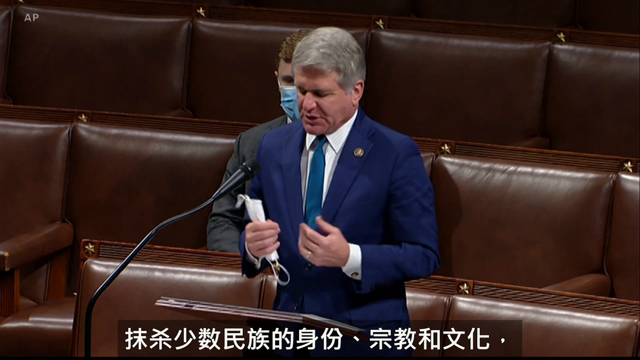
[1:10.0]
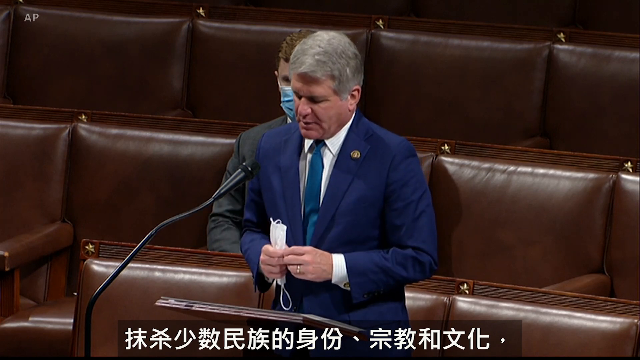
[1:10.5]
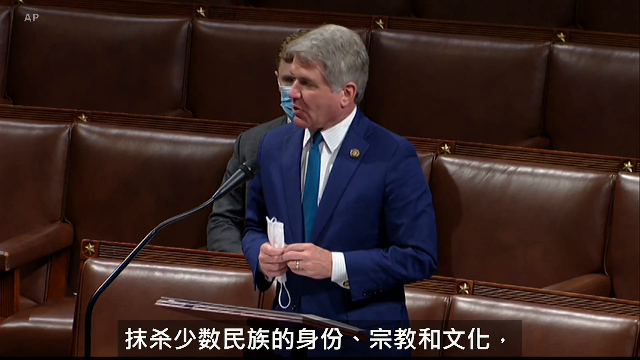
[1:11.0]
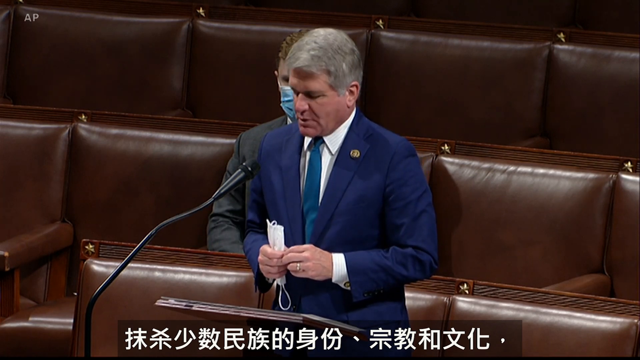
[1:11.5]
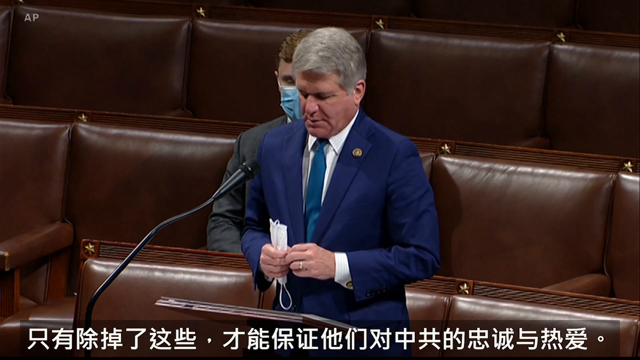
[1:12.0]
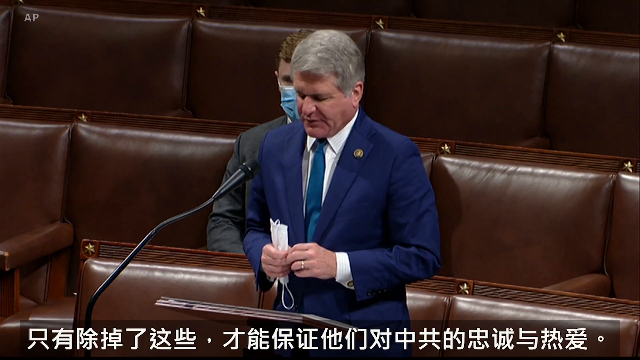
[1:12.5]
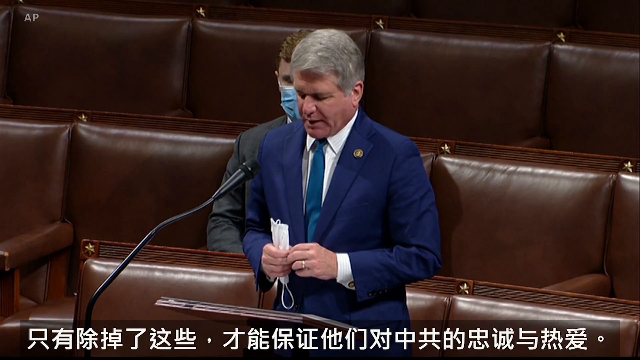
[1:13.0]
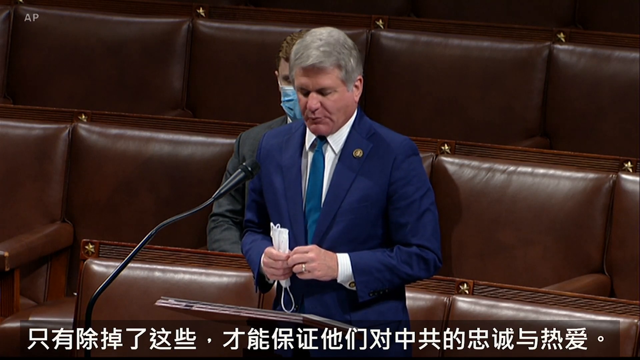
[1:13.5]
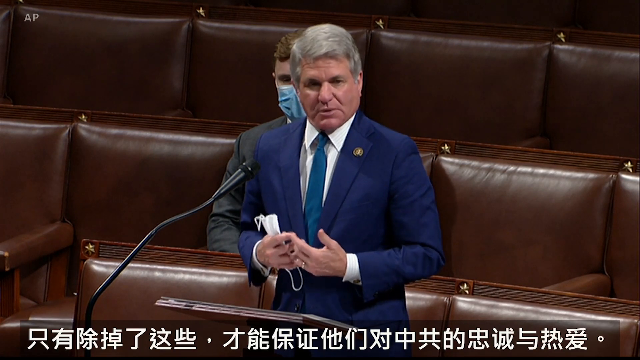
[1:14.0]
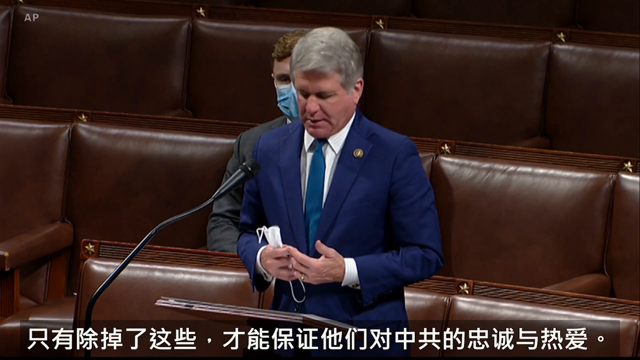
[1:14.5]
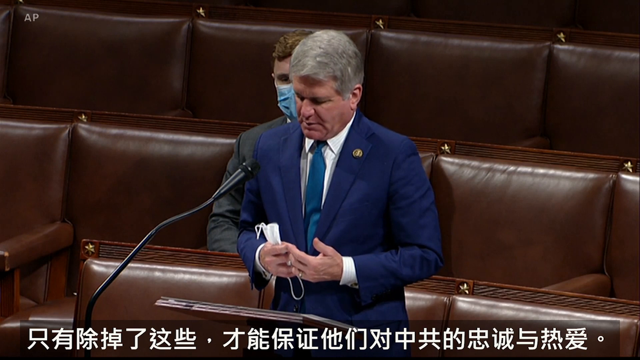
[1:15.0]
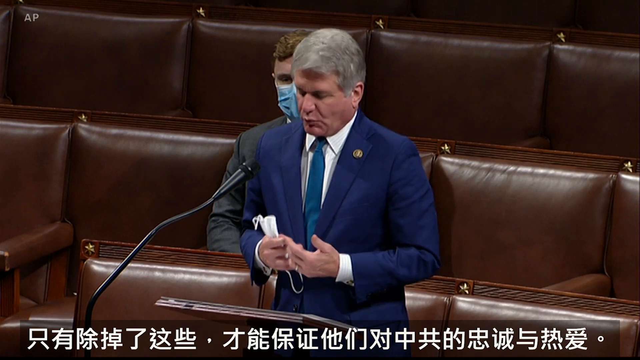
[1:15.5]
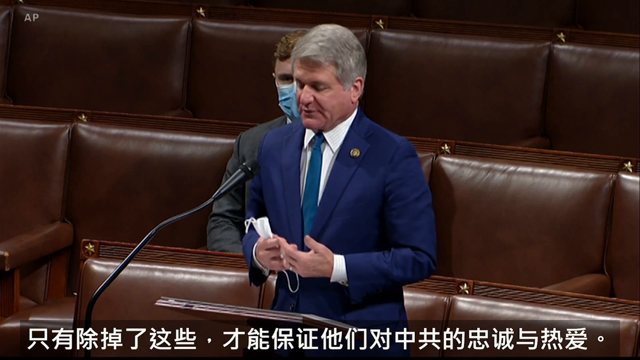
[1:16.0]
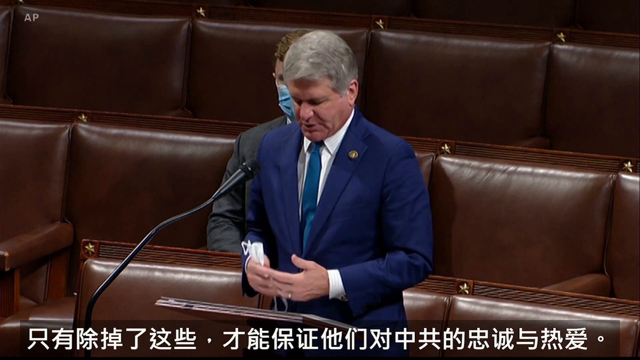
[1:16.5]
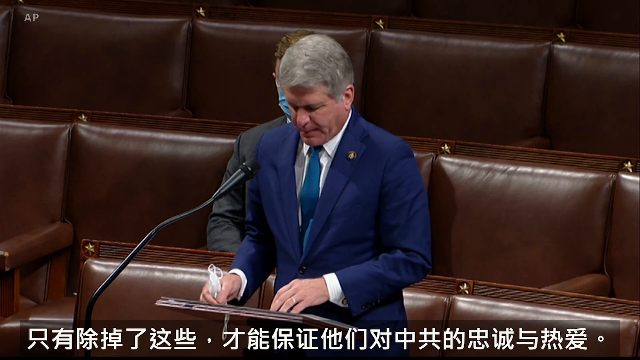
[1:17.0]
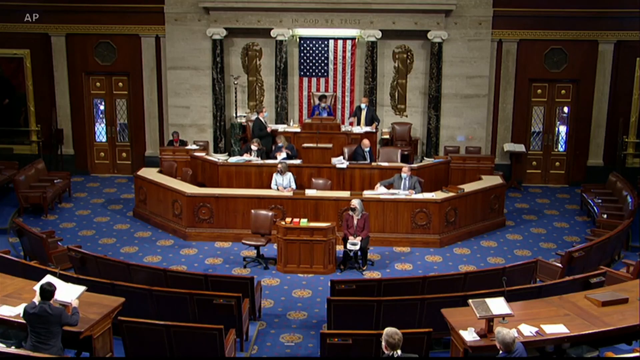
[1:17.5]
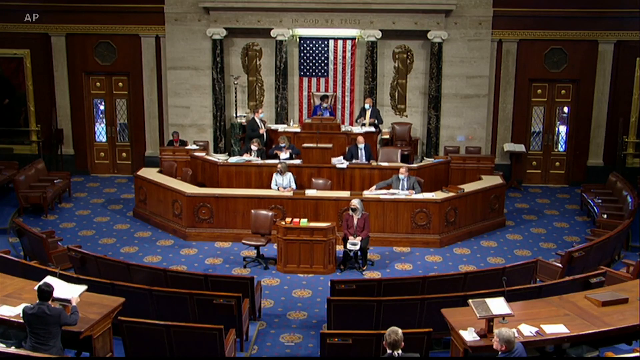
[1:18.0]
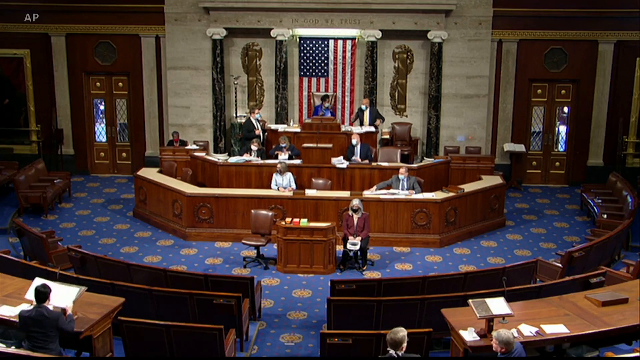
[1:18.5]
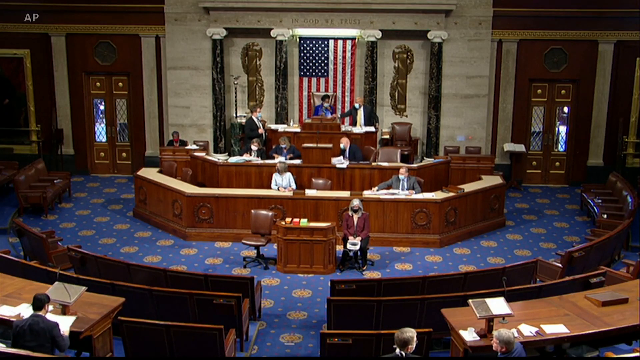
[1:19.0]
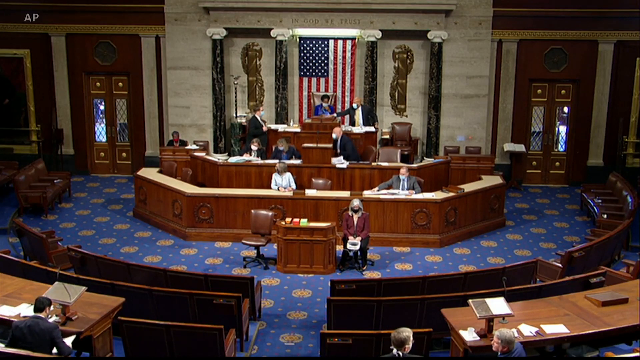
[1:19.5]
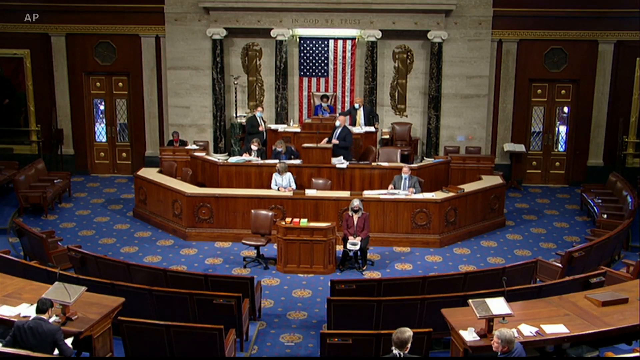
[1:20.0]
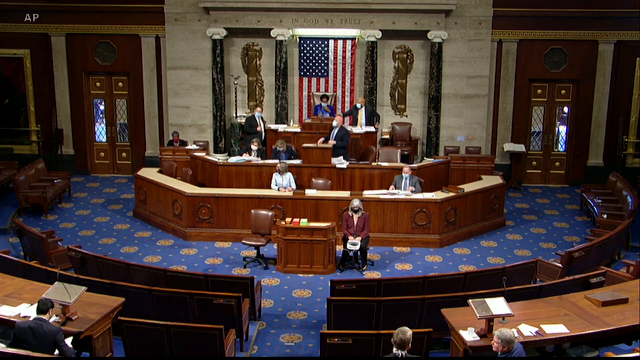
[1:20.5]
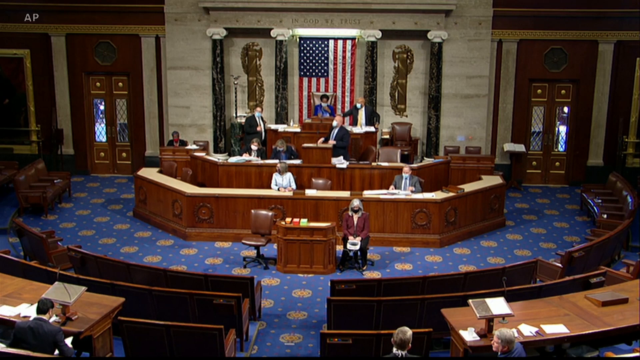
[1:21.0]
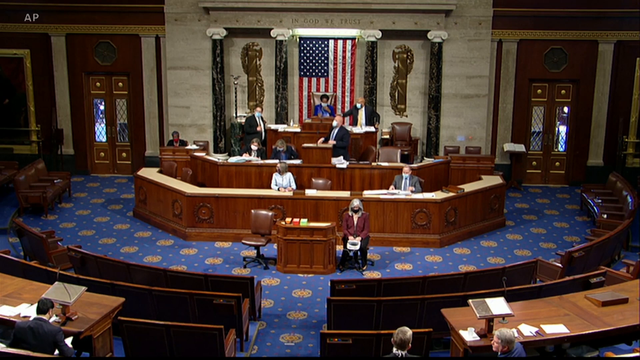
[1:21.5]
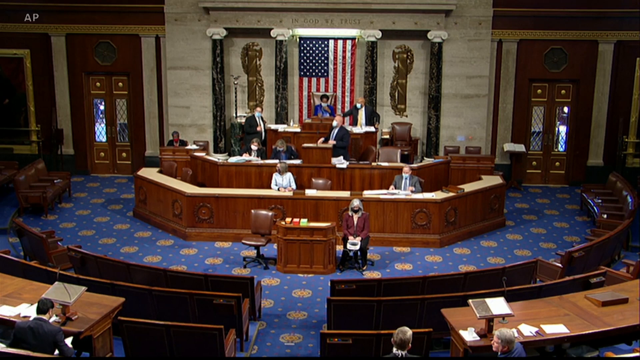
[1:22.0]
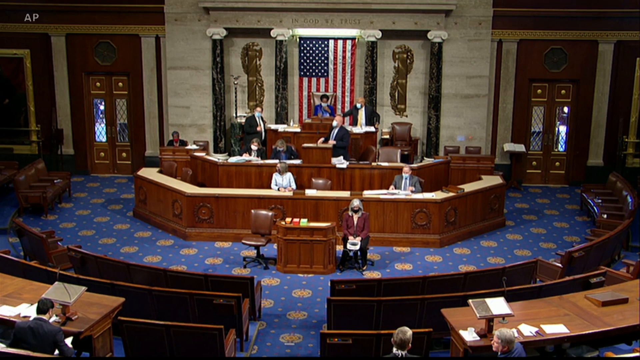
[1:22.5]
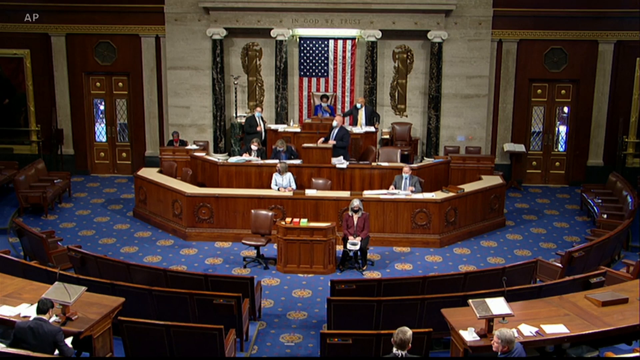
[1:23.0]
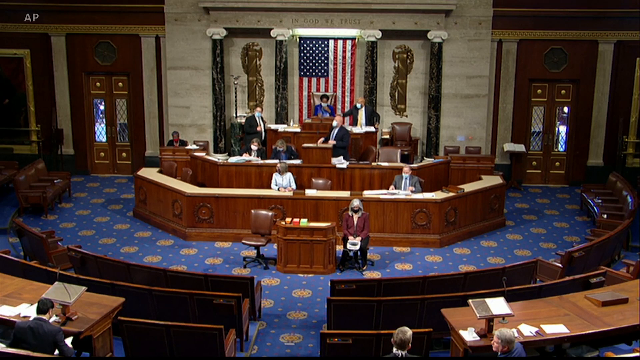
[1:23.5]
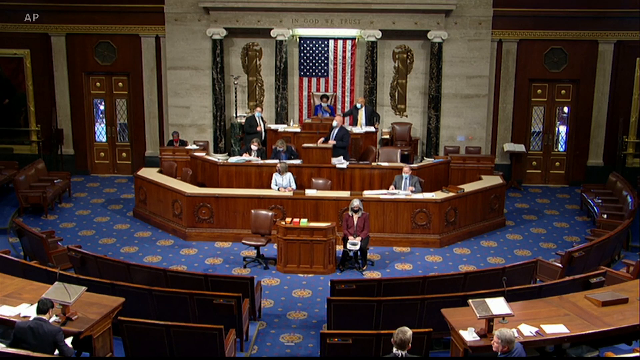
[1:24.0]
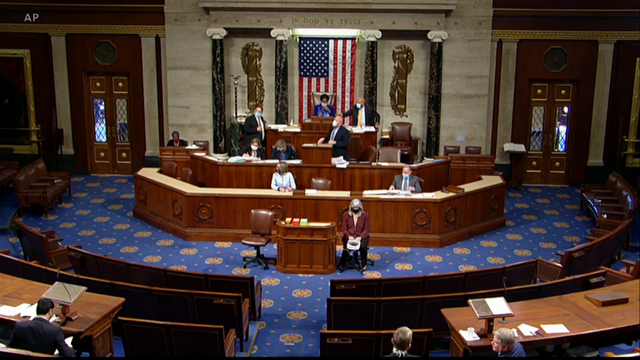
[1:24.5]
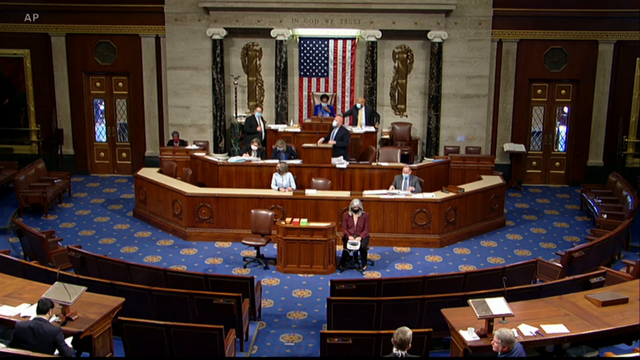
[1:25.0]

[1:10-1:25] The congressman in the blue suit continues his speech, looking down at his notes while holding his medical mask in his hand. He kind of looks around the room to address all members of the court. The courtroom then shuffles around a bit, as they may be taking a break or be finished for the day. A few of the congressmen turn to the judge, maybe to give her some paperwork or some details about the case. People walk around the large windows of the courtroom door, and it seems very busy outside, although the courtroom is pretty empty. The stenographer continues at the front of the desk, possibly trying to capture any last words or possibly during the break. For the most part, the people in the audience remain seated.